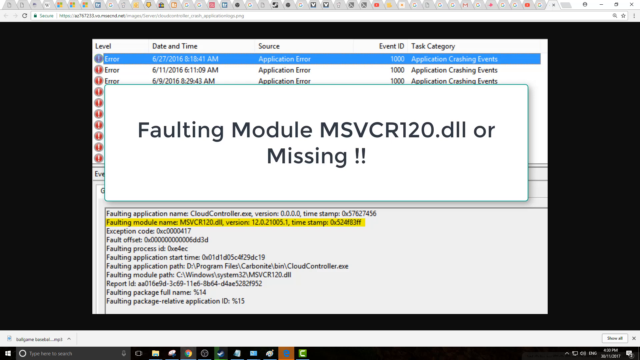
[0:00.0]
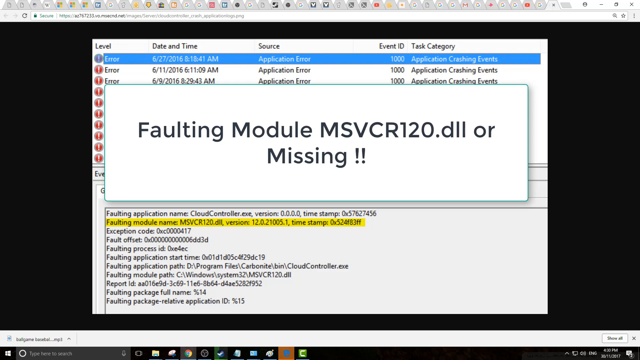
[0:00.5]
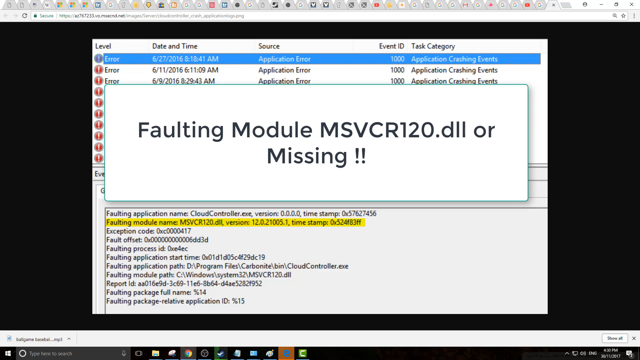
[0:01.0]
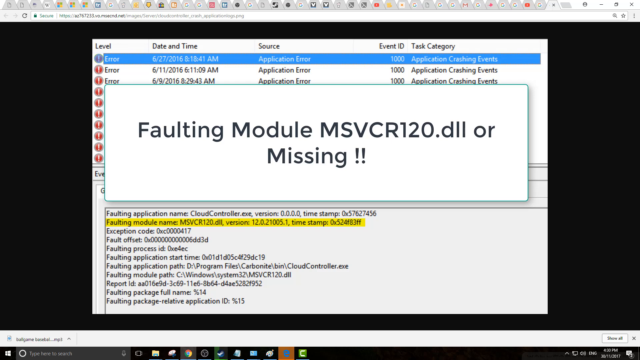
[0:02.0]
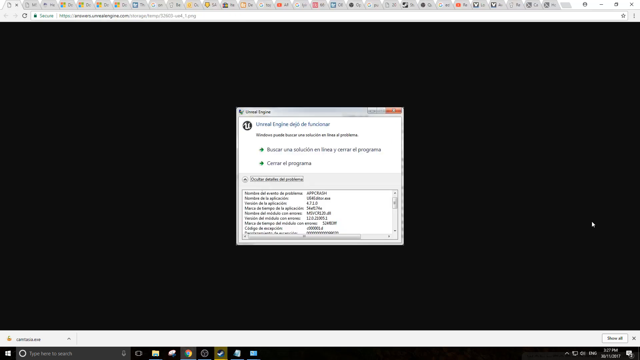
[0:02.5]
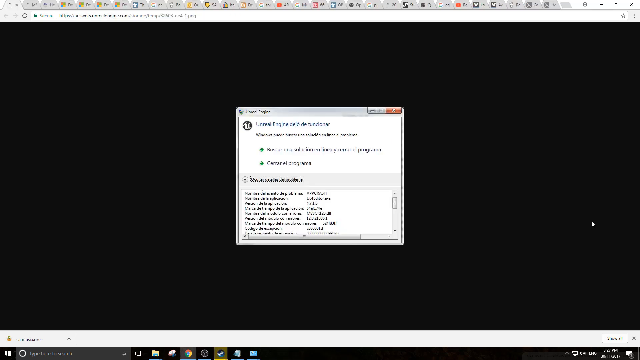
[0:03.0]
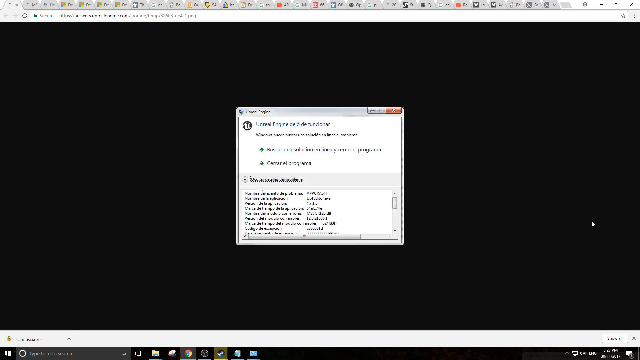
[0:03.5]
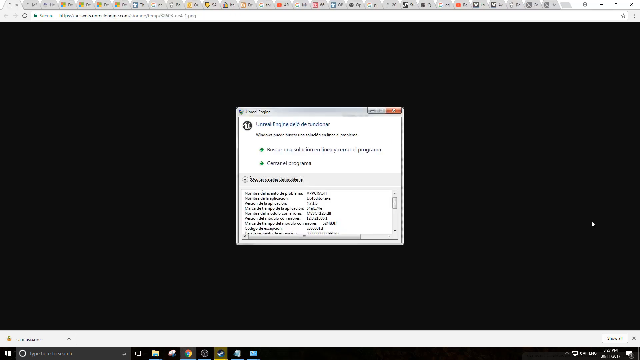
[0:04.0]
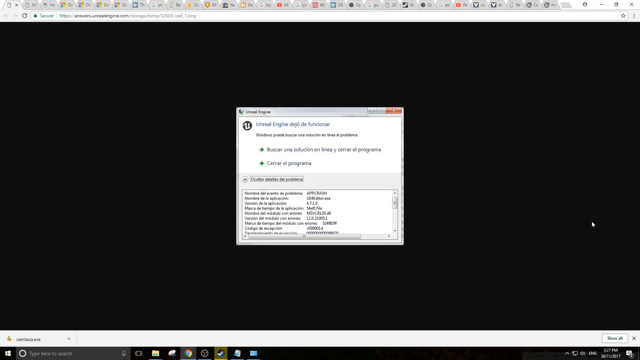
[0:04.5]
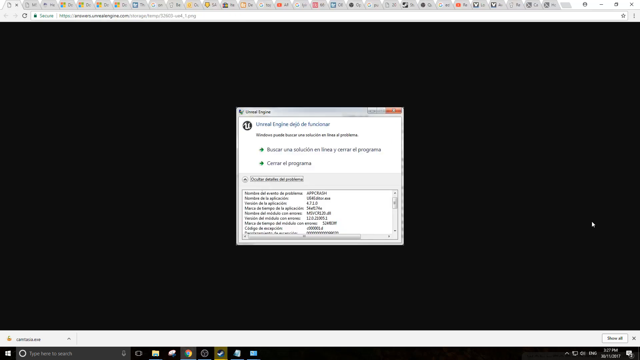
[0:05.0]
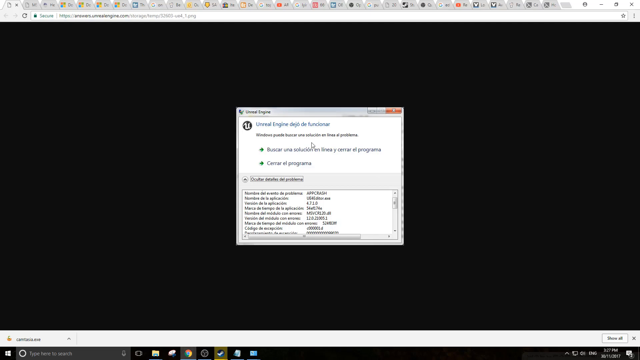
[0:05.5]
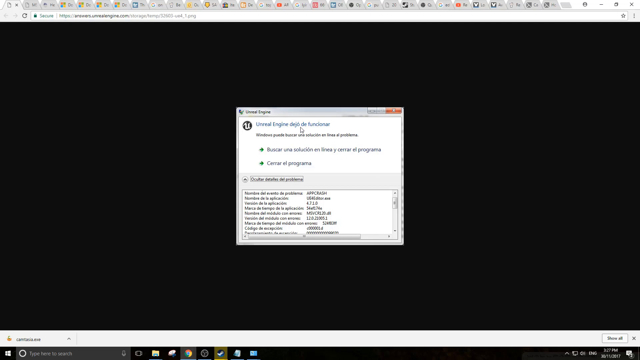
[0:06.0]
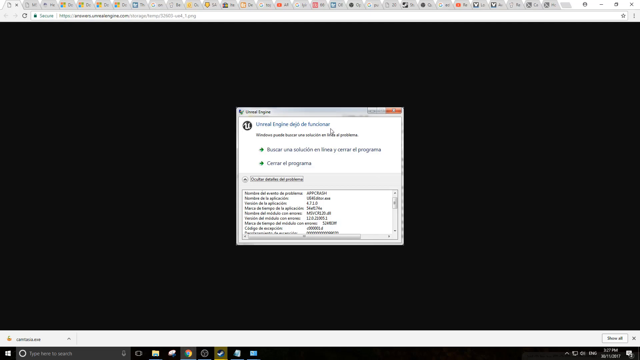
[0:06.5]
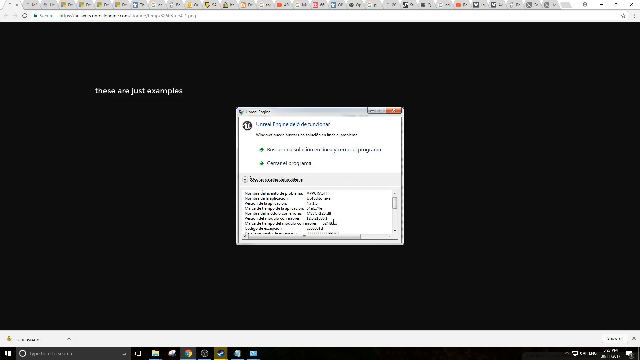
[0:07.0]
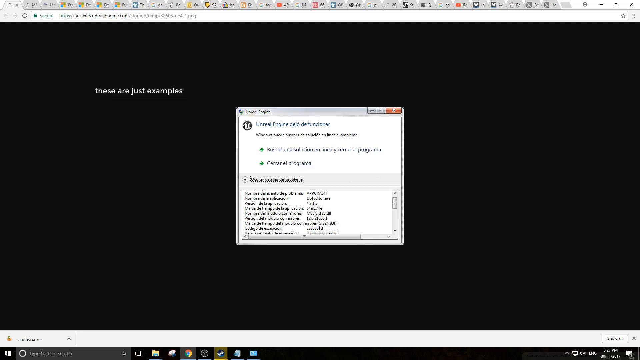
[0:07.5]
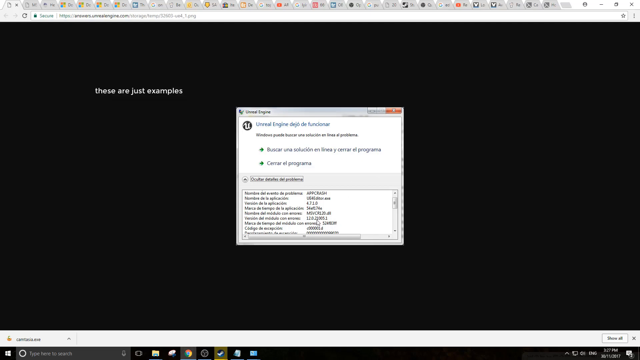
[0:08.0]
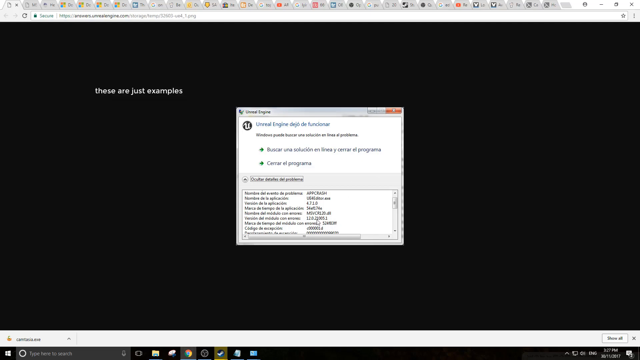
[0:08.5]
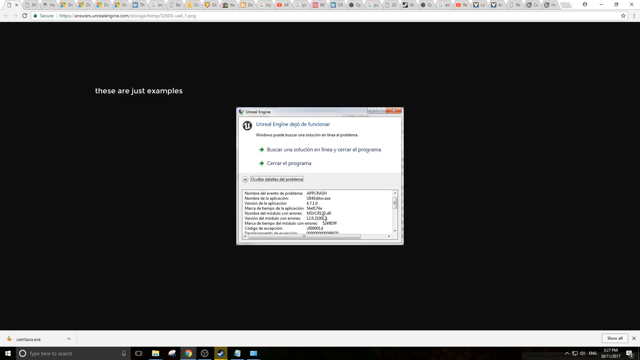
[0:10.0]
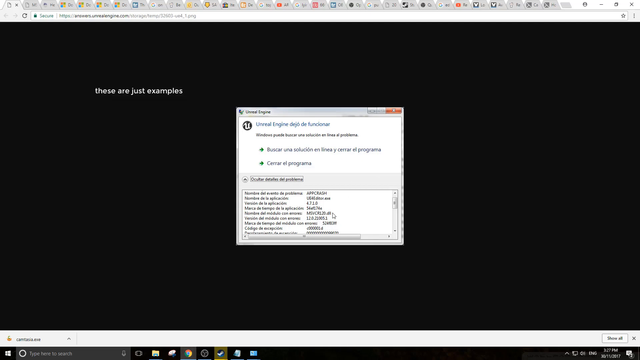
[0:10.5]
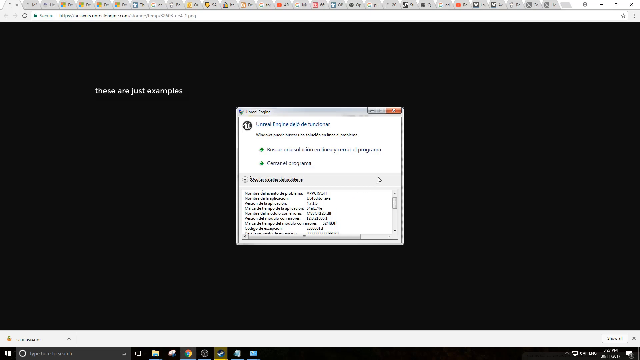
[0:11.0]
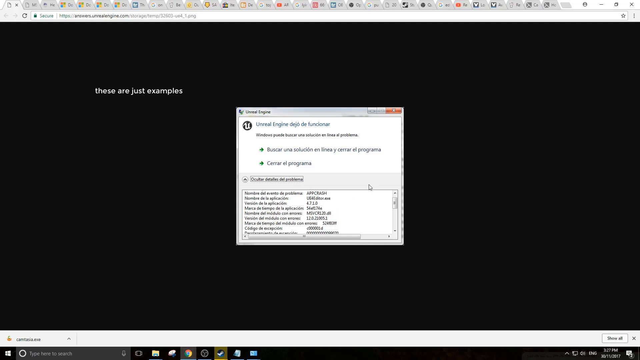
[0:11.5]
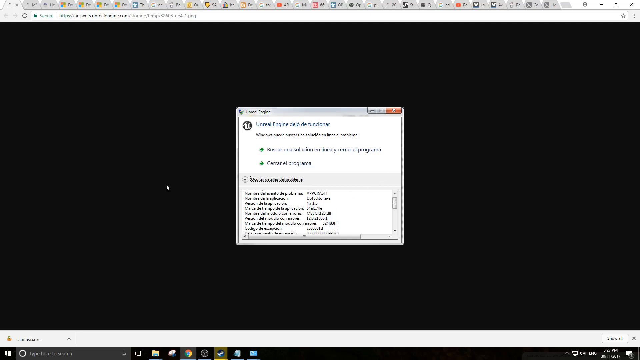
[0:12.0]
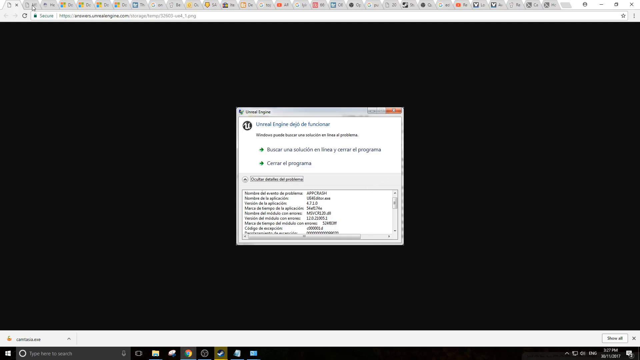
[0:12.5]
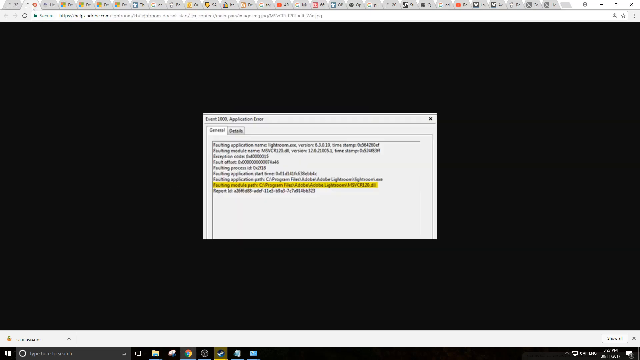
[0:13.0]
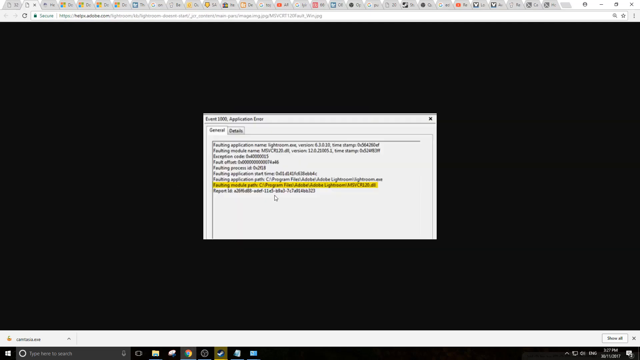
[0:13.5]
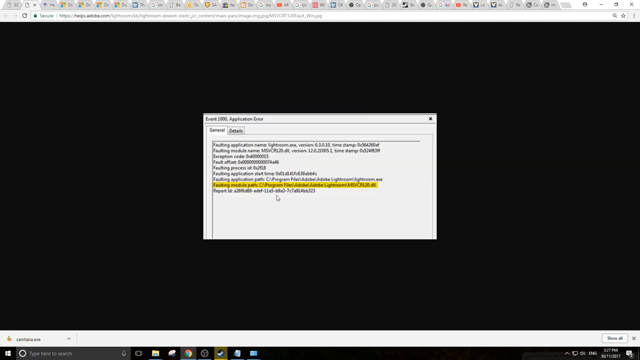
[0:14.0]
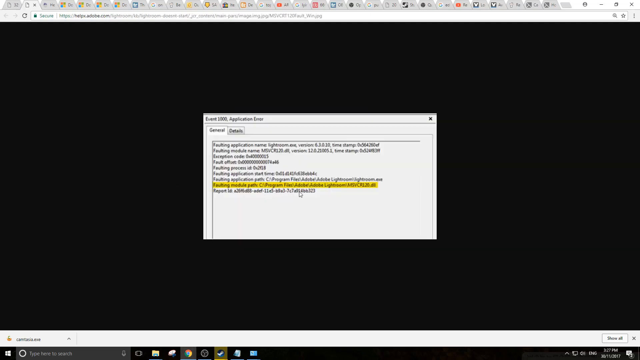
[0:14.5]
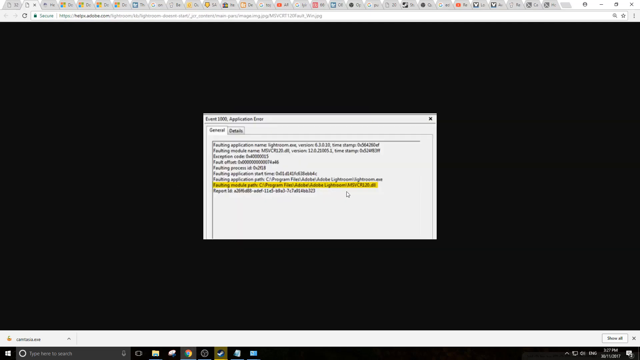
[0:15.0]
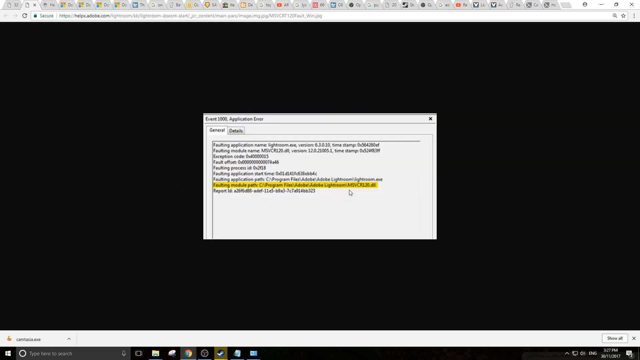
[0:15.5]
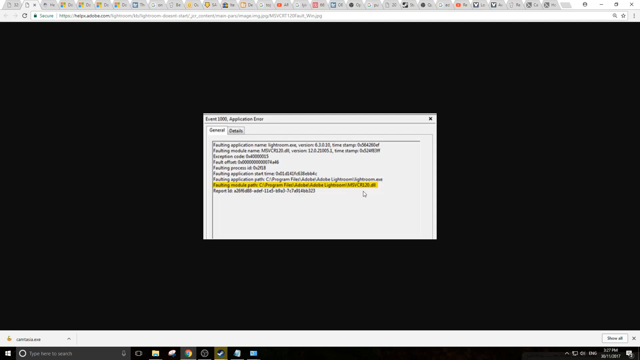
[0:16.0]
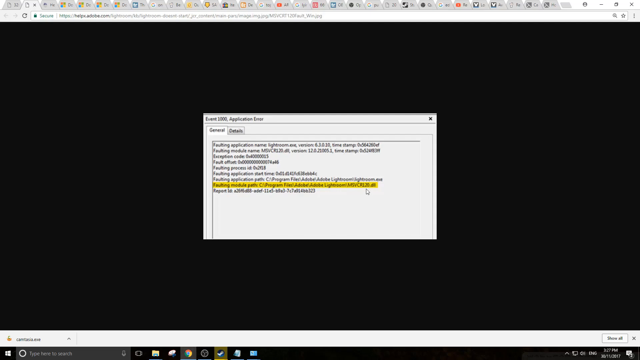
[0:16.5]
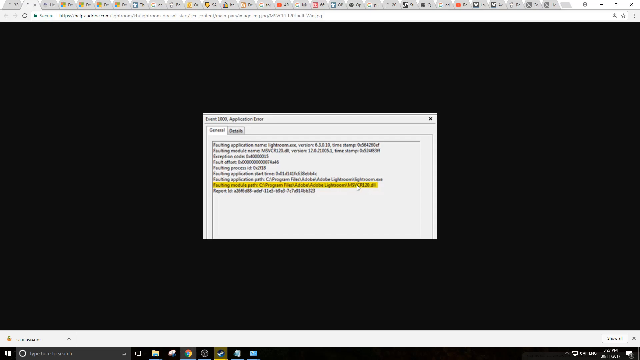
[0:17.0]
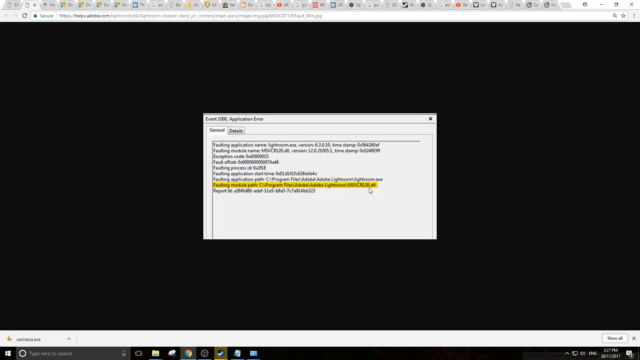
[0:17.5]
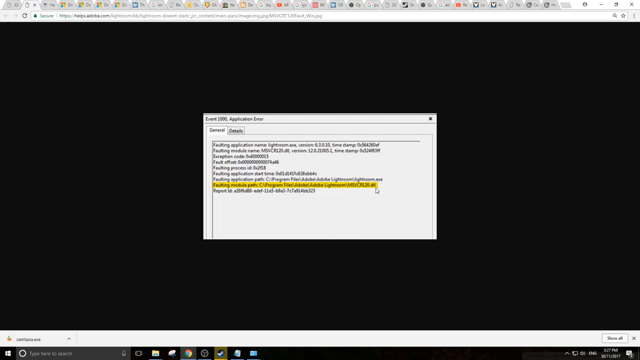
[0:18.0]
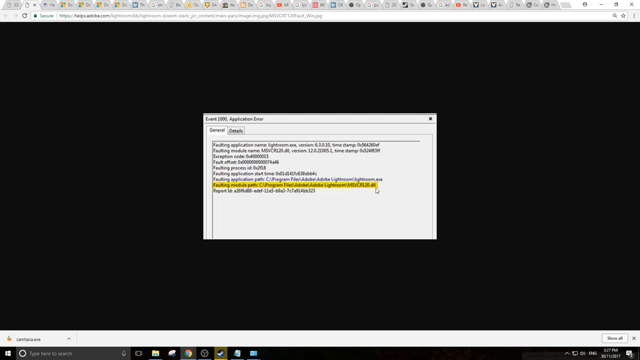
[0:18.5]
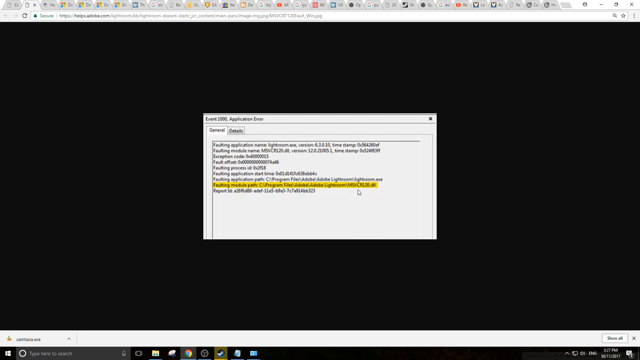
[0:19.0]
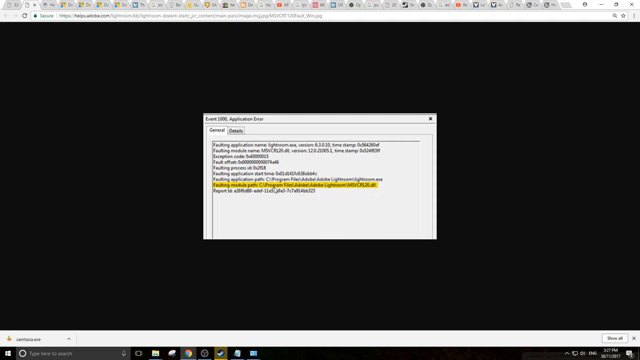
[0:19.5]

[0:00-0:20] A computer screen has lots and lots of tabs open at the top, and on the screen there seems to be an error message that says "faulting module MSVCR120.dll" along with "Missing" followed by two exclamation marks. It looks as though there is an application error, with several errors found at different times and the application crashing repeatedly. Some examples of error logs and faulting module names are visible. Another image of a computer issue box then appears; its language is not English, and it is something to do with Windows. Different versions and modules are listed in the box, and it is an error message asking whether to look for a solution or close the program. The mouse hovers around, and then another application error screen is shown. The mouse hovers over some of the text. The faulting module path is highlighted in yellow, while the rest of the text is black on a white background.